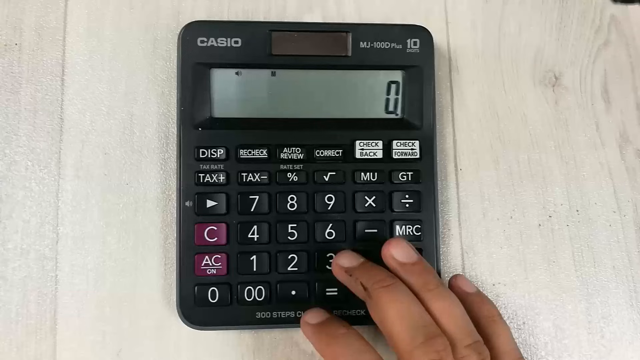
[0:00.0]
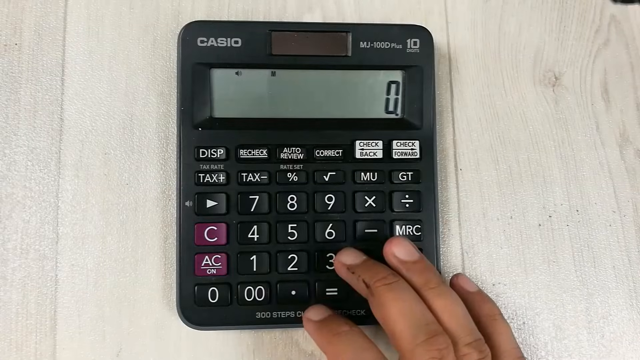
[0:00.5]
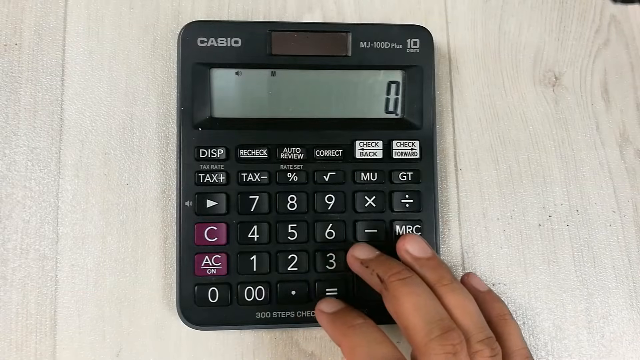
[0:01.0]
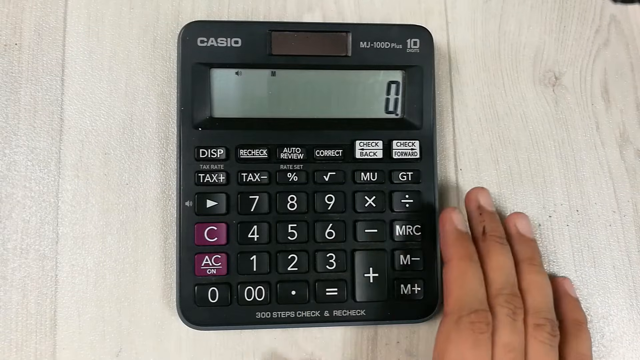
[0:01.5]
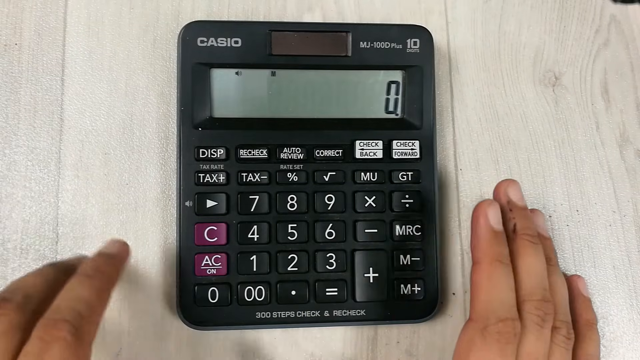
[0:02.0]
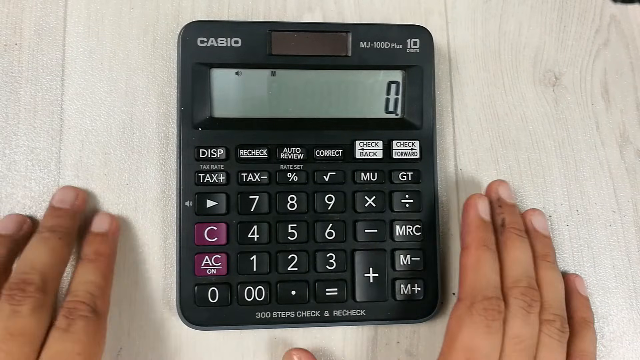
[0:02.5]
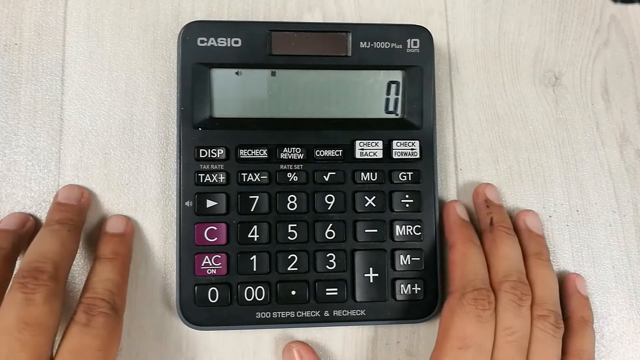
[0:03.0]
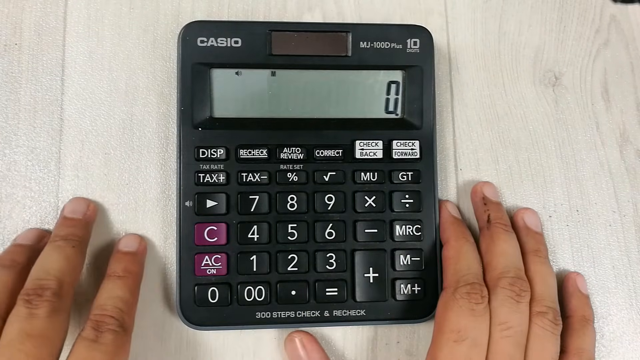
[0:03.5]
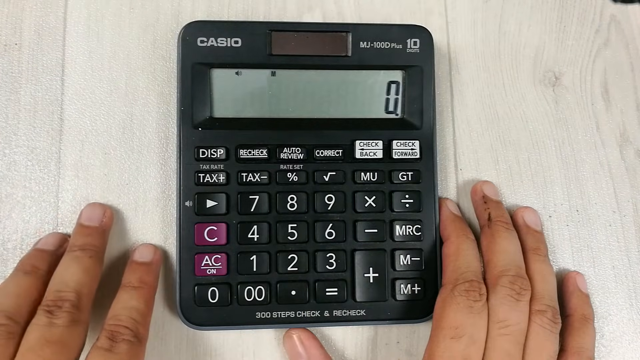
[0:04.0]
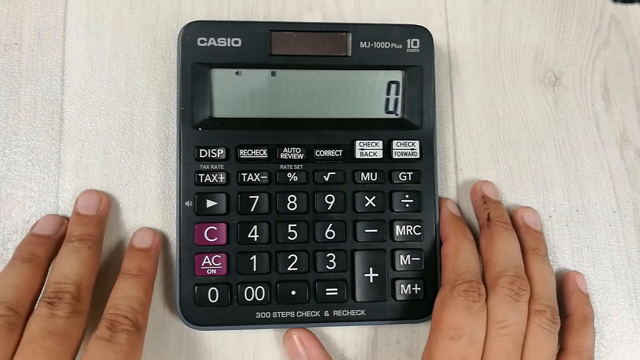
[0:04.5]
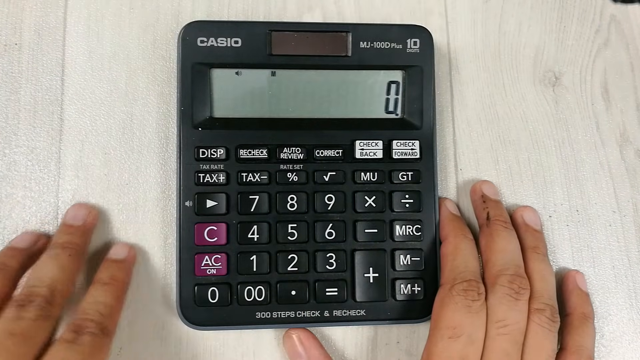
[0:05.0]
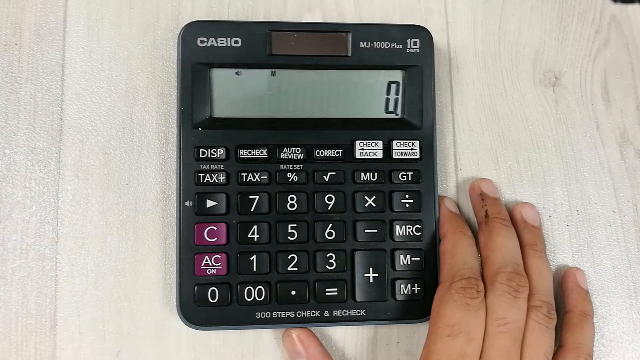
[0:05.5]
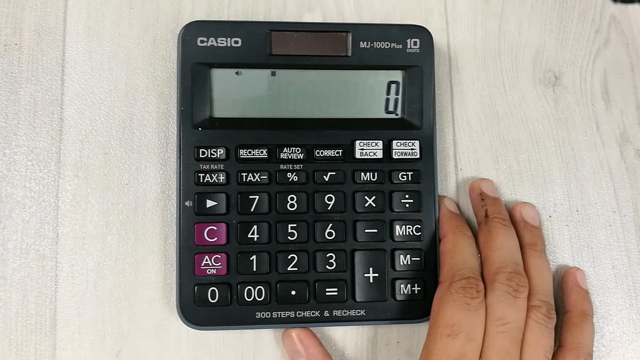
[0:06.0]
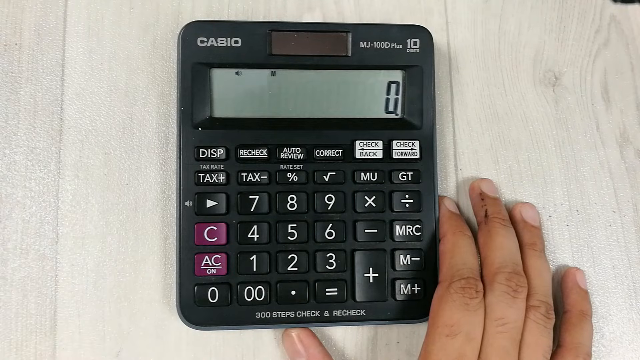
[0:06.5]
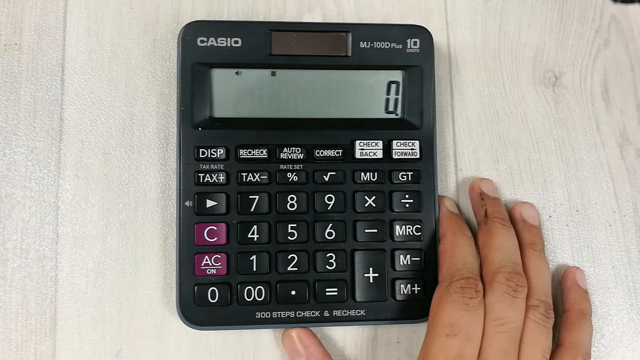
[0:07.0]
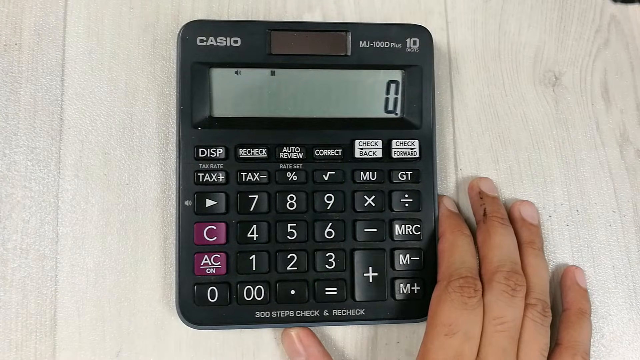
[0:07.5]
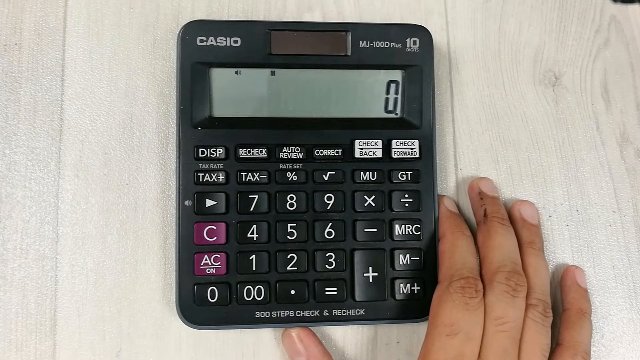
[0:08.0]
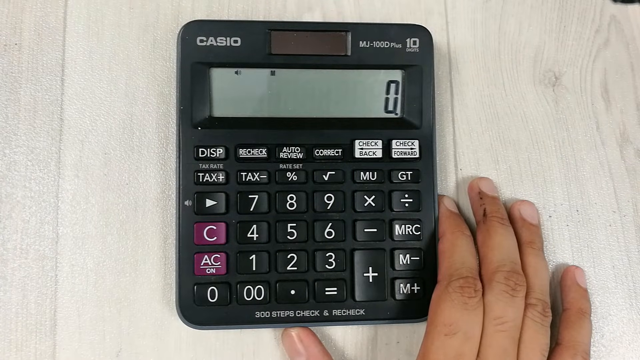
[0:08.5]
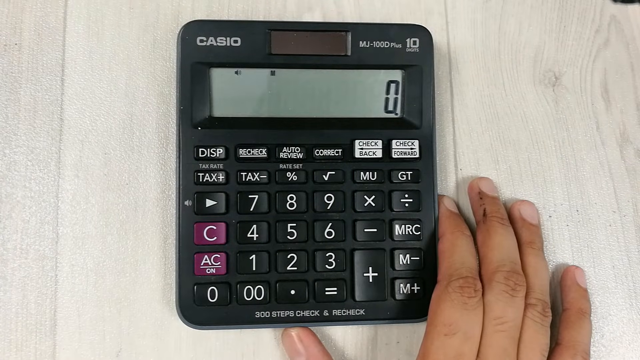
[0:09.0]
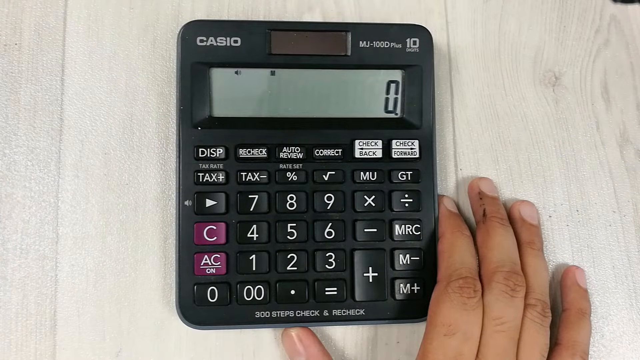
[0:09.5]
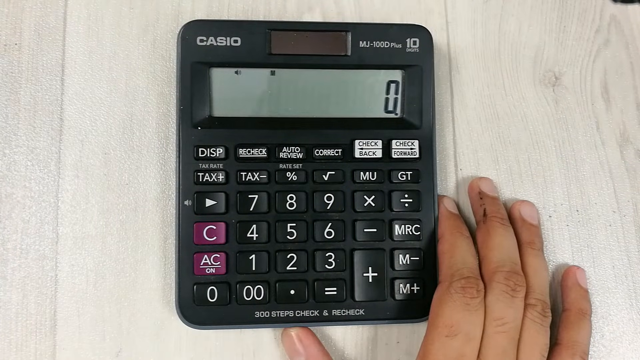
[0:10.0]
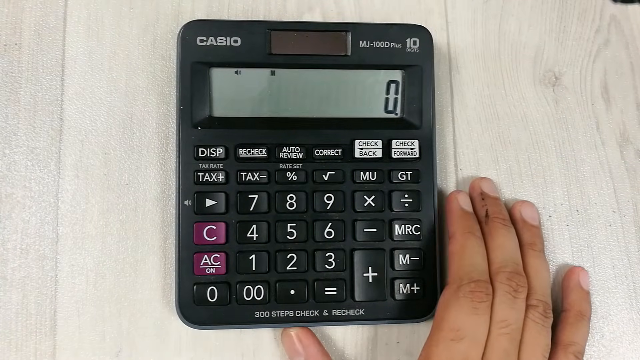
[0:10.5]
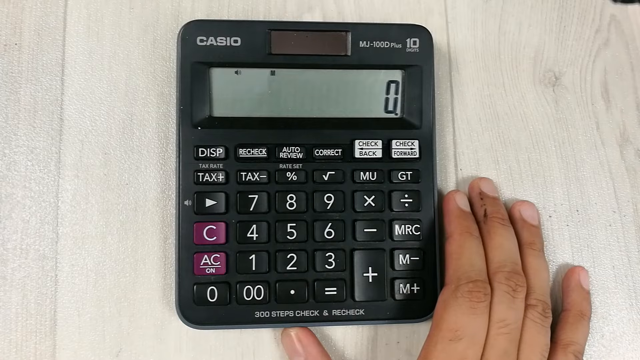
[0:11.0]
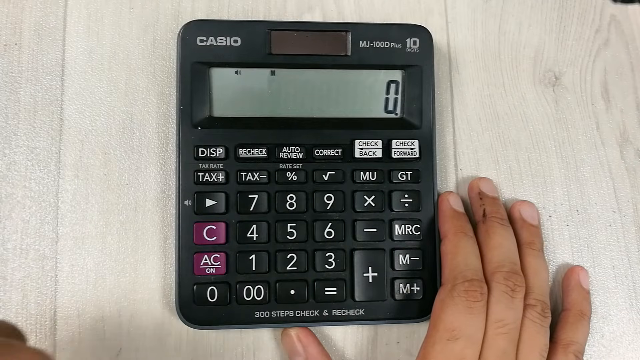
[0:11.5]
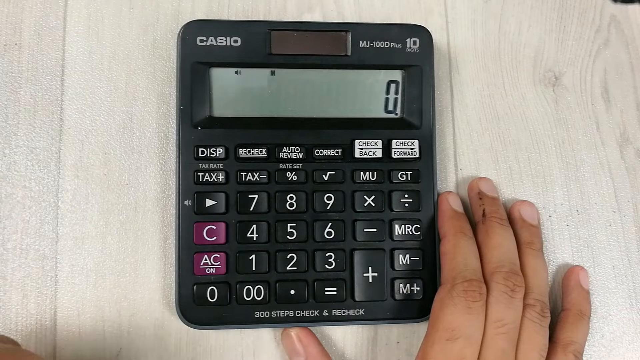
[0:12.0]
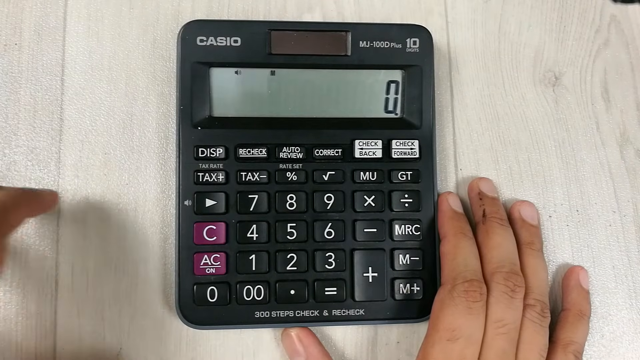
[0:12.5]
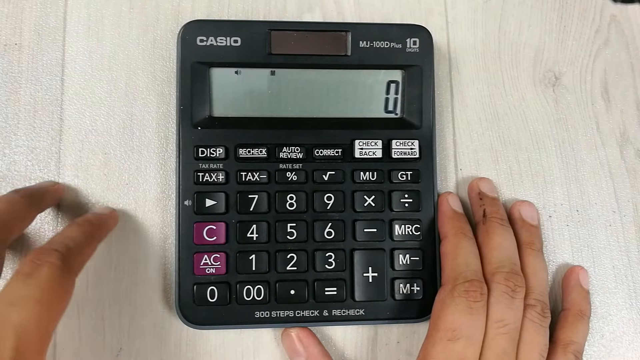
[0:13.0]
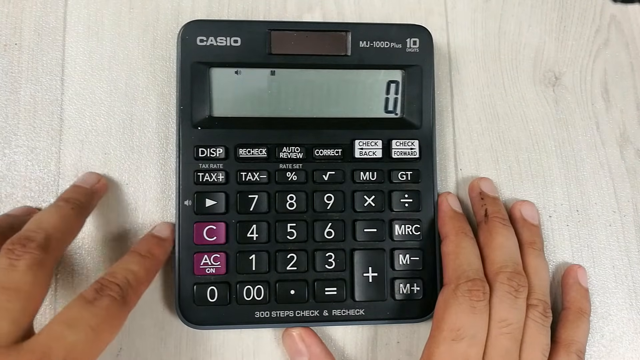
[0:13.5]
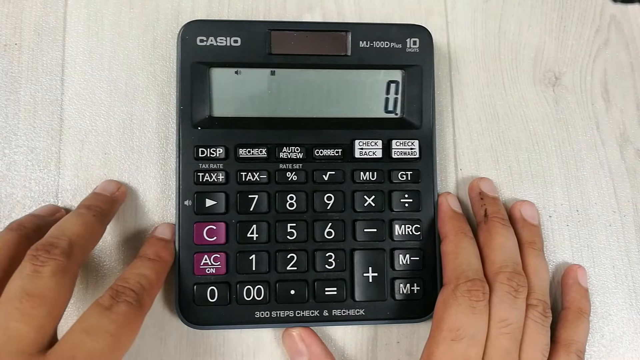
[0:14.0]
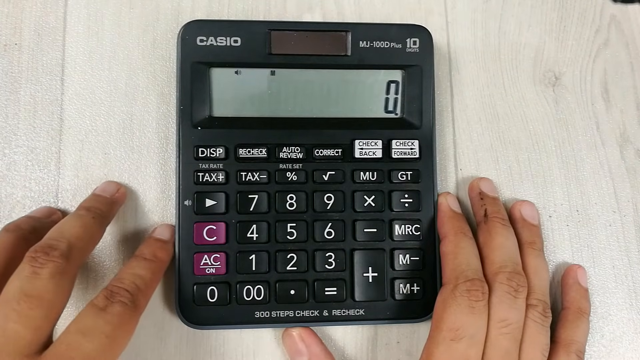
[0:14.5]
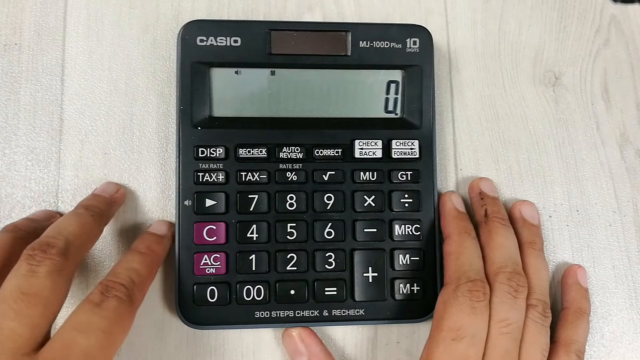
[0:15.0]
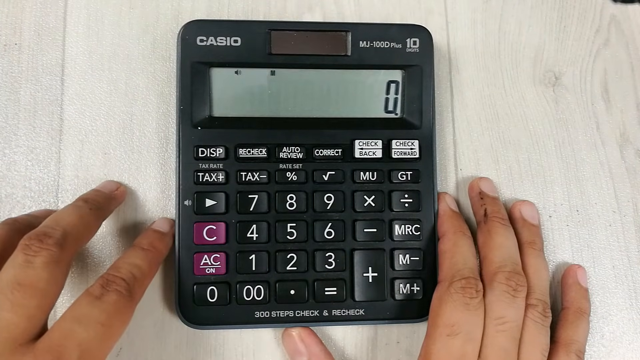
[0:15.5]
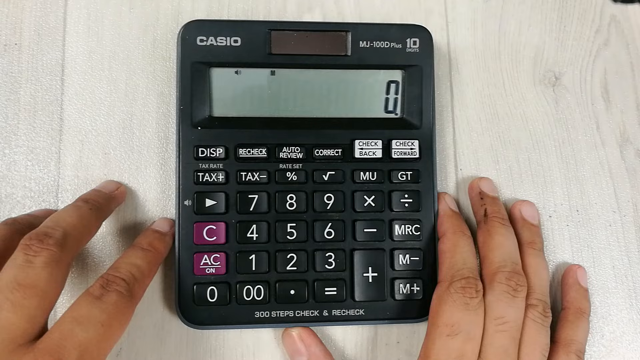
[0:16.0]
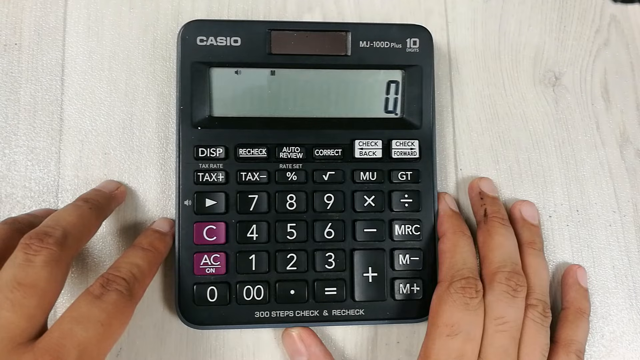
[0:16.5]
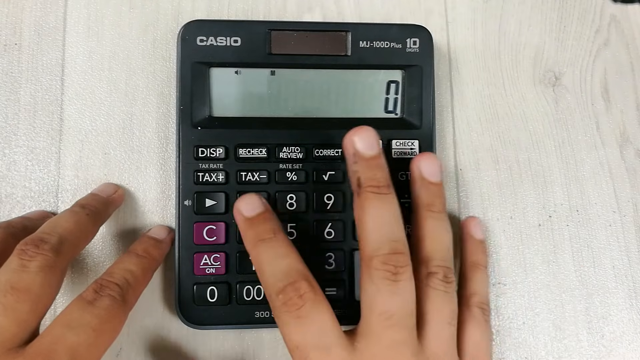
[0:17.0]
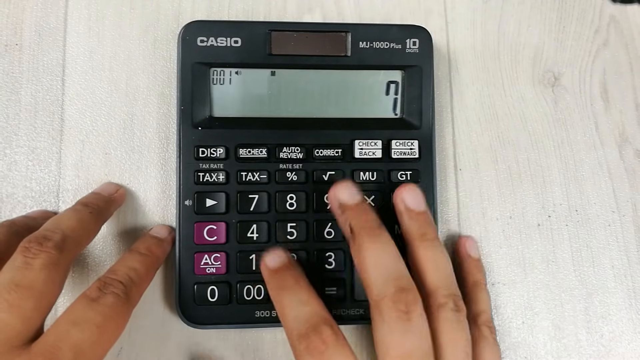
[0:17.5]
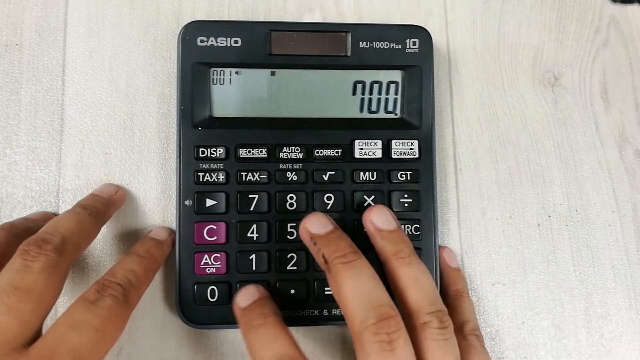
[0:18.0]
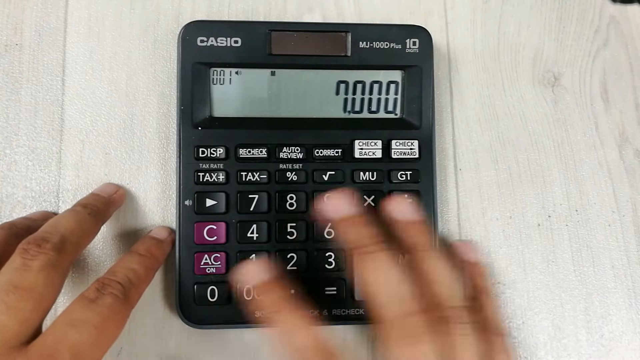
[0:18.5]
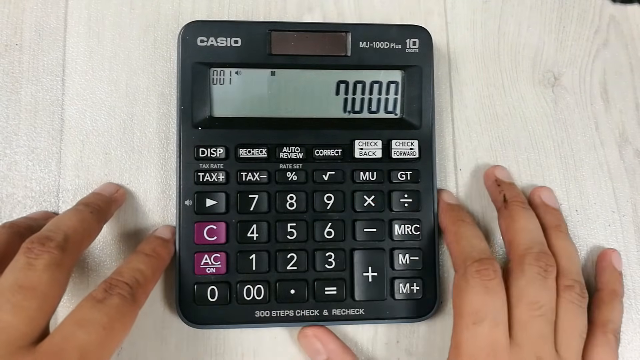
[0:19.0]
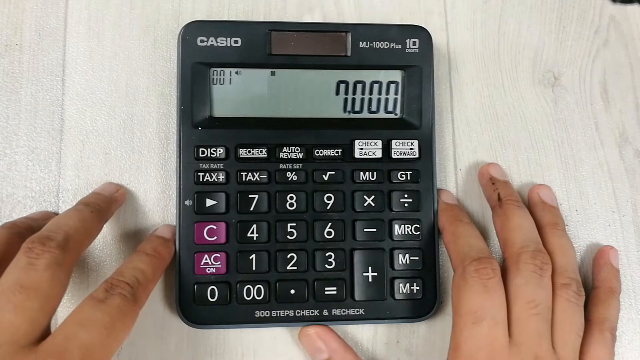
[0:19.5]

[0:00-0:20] A black Casio calculator sits on a table made of light-colored wood with a grayish-white color. A person rests their right hand on the calculator, then brings both hands beside it. They take their left hand away while leaving their right hand on the calculator, then bring the left hand back onto the table. Only the calculator and the camera person's hands are visible; nothing else can be seen. The person then uses their right hand to type 7,000 into the calculator, and the number appears on the display. It is one continuous shot with no cuts, and the camera stays focused on the calculator the whole time. The middle finger of the person's right hand appears to have a black scar, and the middle finger of their left hand also appears to have a black scar.